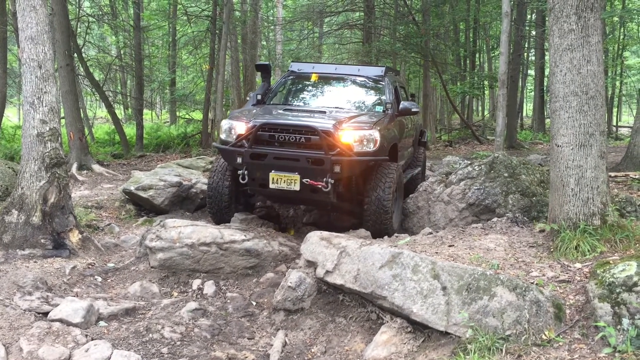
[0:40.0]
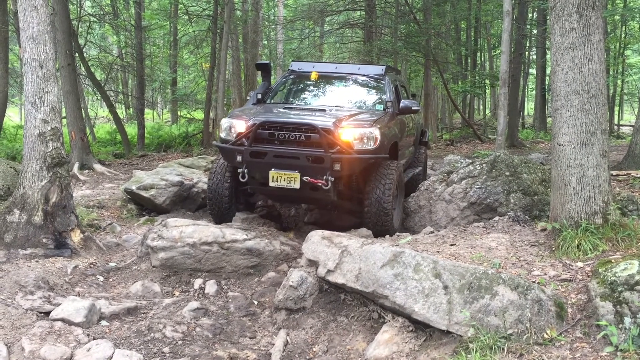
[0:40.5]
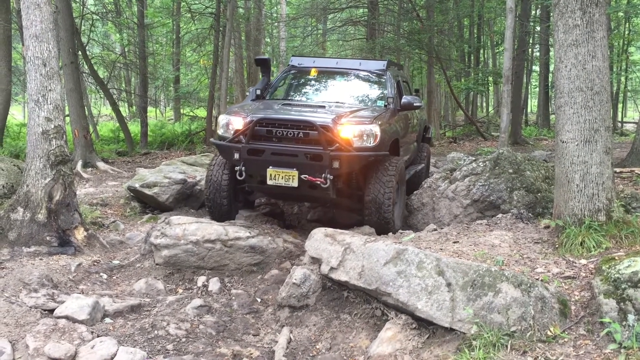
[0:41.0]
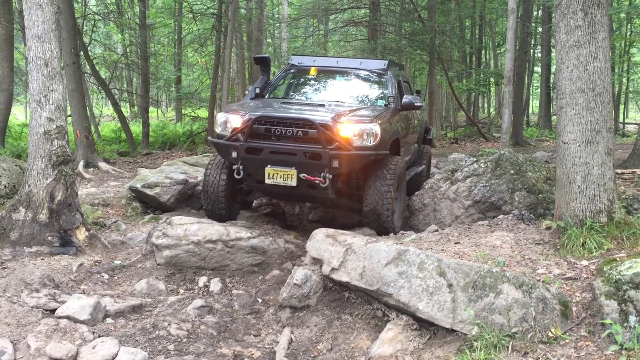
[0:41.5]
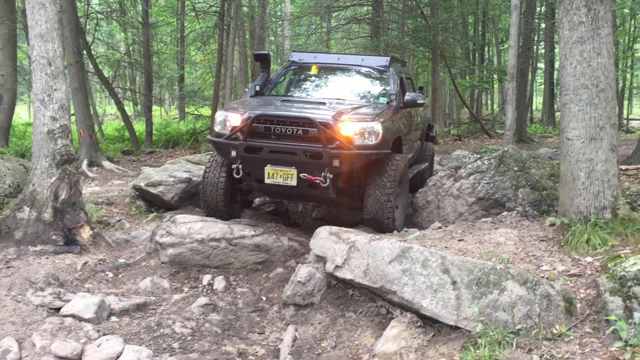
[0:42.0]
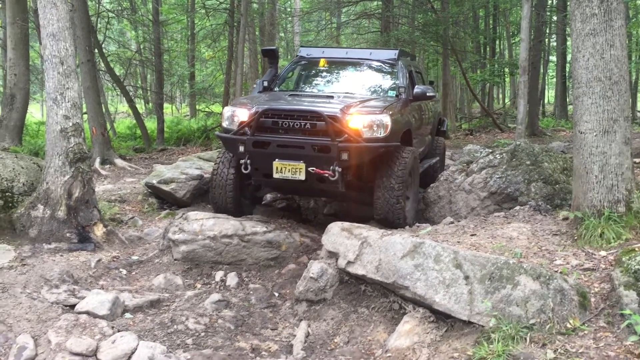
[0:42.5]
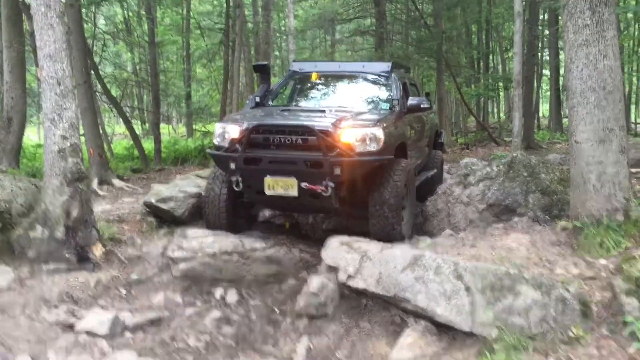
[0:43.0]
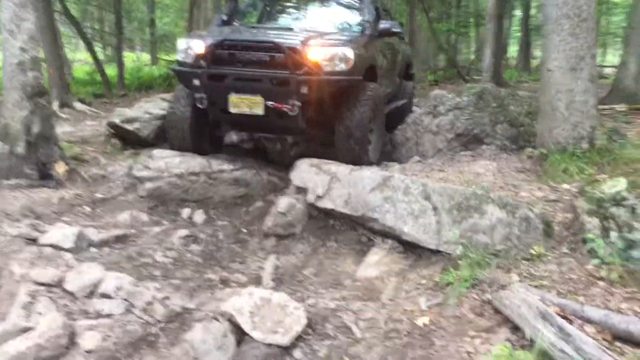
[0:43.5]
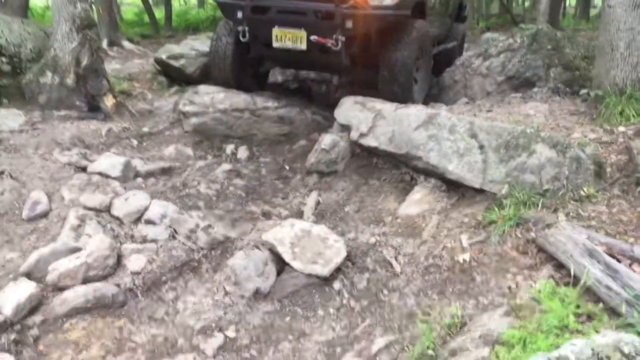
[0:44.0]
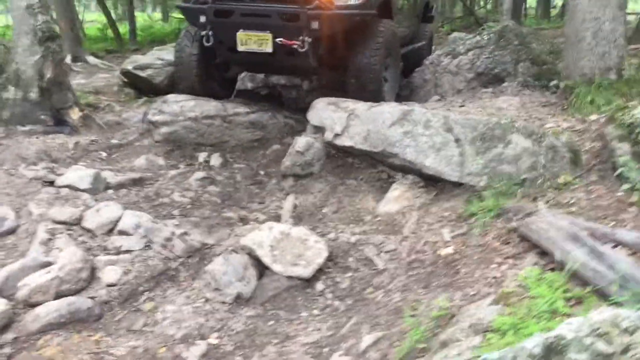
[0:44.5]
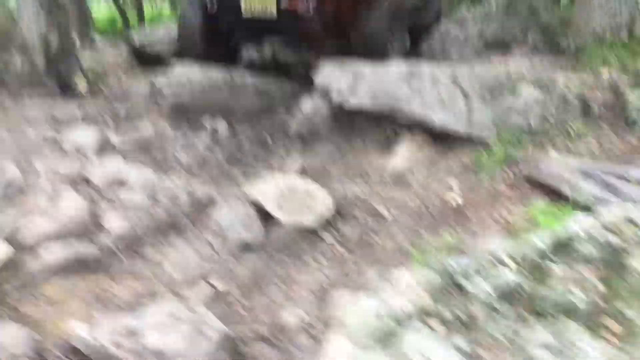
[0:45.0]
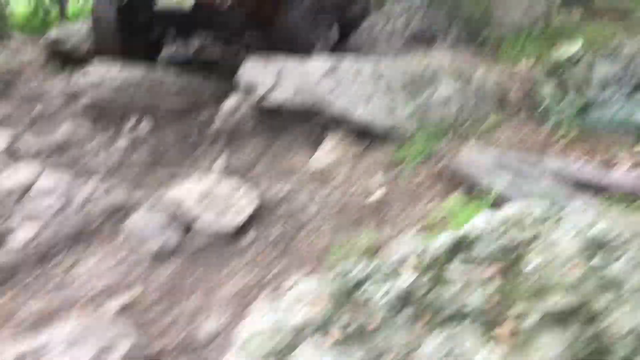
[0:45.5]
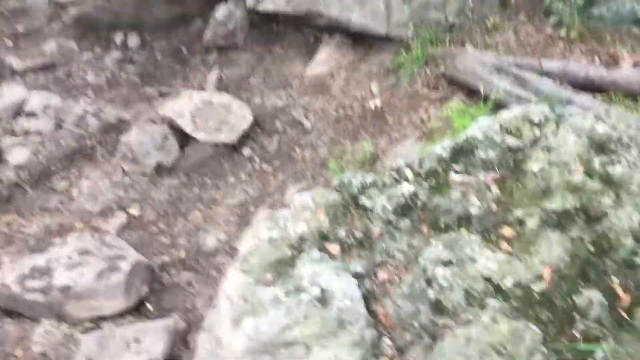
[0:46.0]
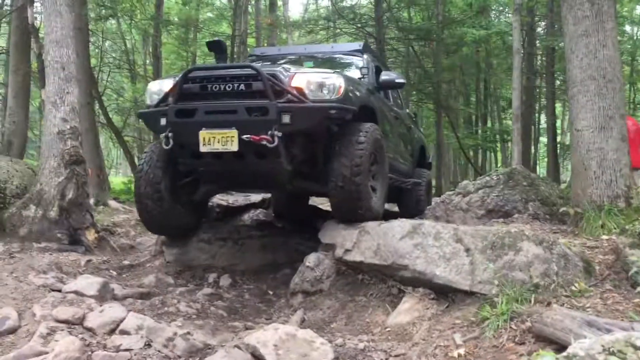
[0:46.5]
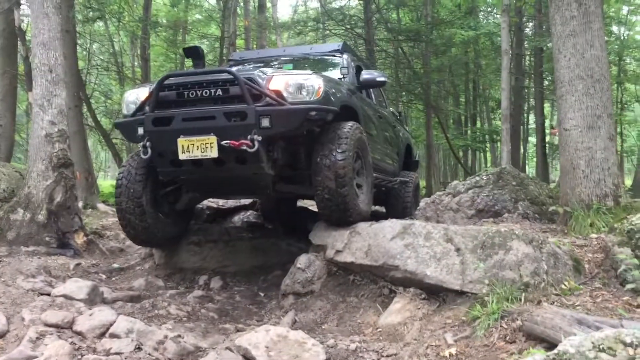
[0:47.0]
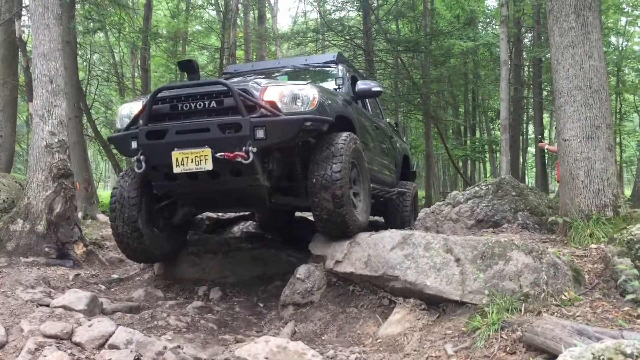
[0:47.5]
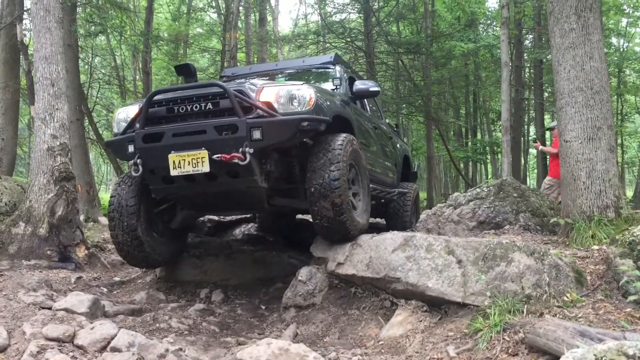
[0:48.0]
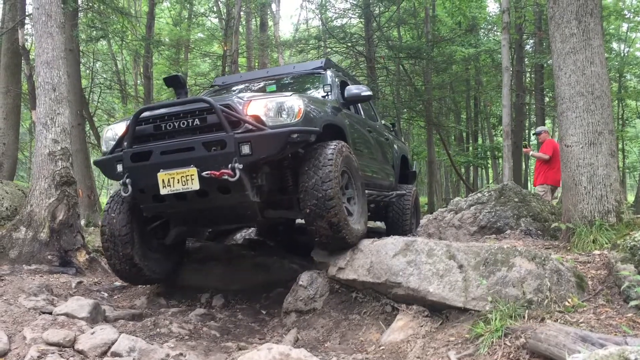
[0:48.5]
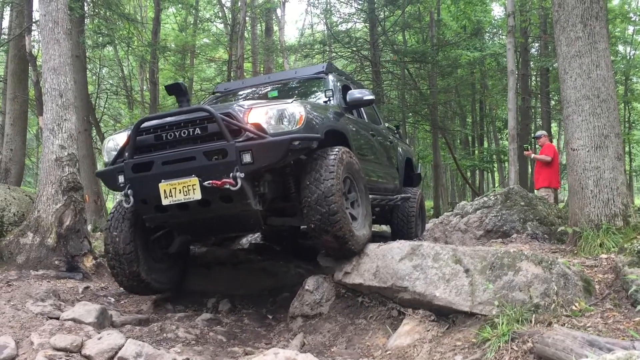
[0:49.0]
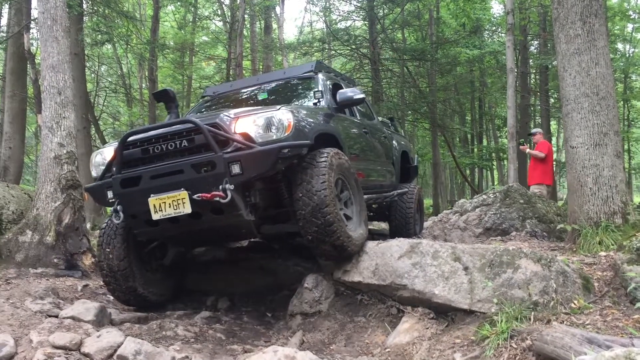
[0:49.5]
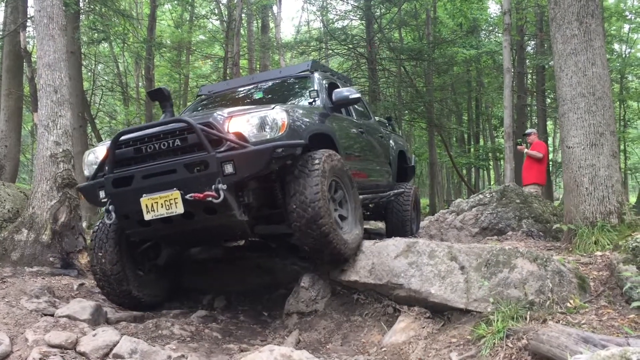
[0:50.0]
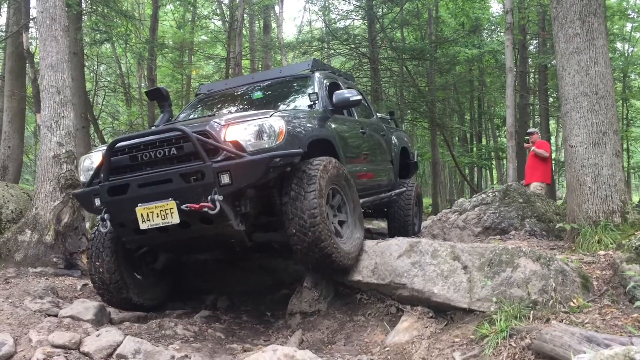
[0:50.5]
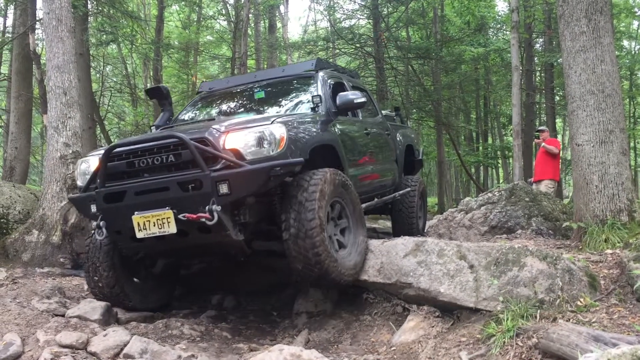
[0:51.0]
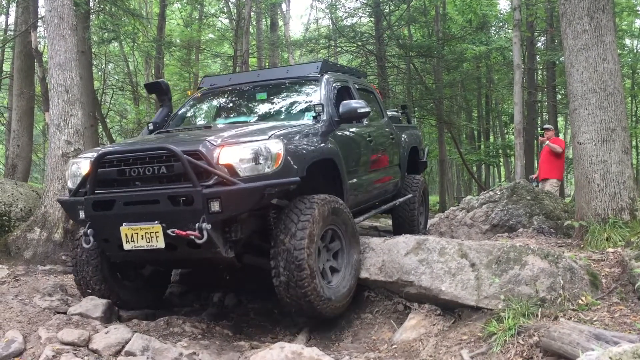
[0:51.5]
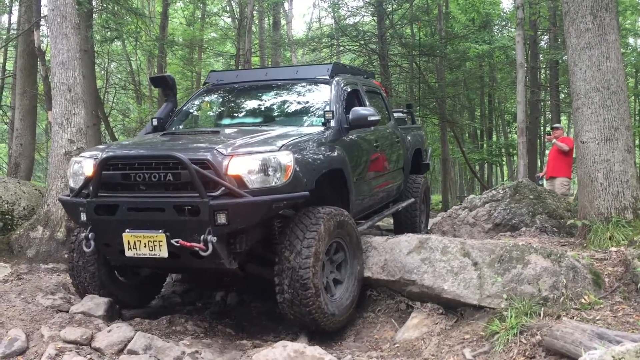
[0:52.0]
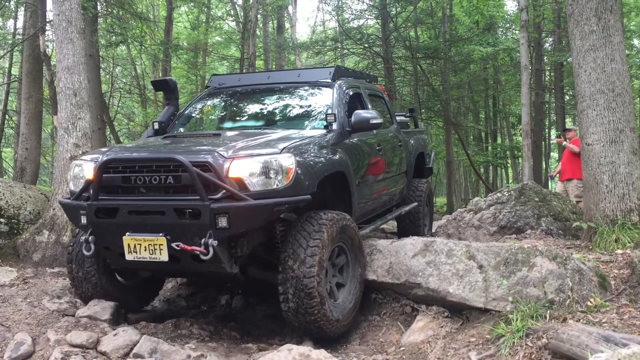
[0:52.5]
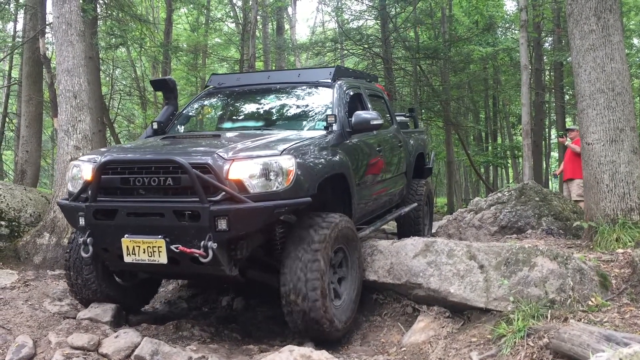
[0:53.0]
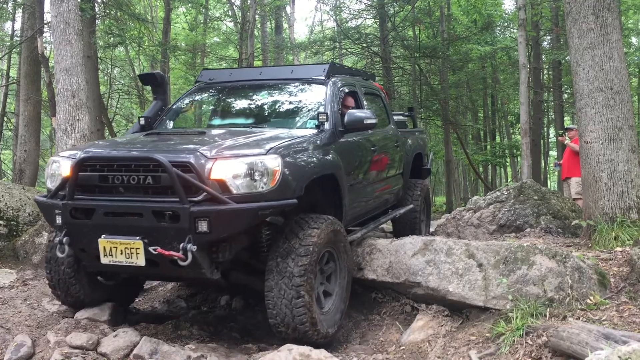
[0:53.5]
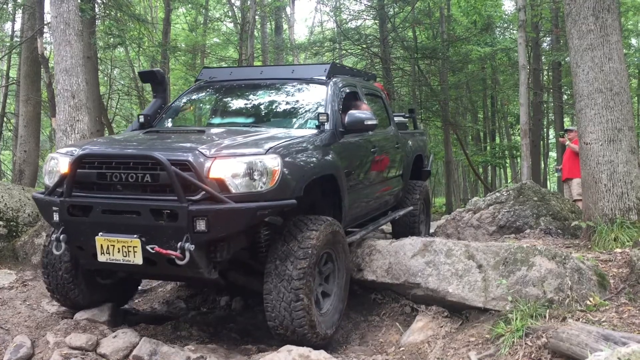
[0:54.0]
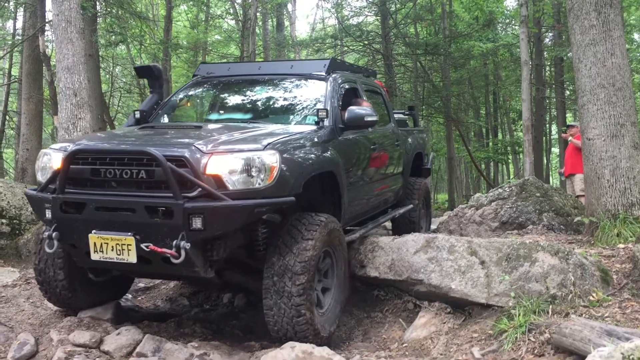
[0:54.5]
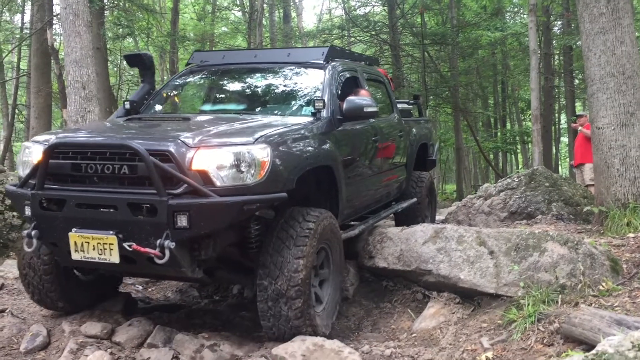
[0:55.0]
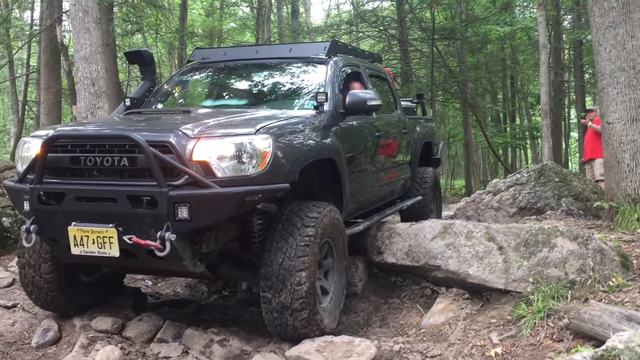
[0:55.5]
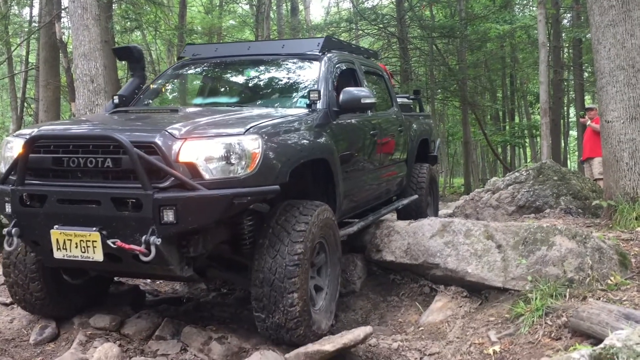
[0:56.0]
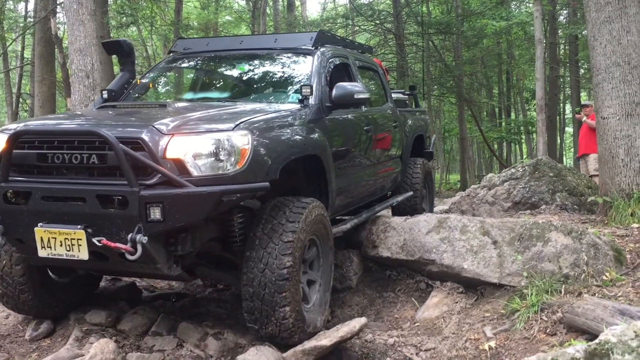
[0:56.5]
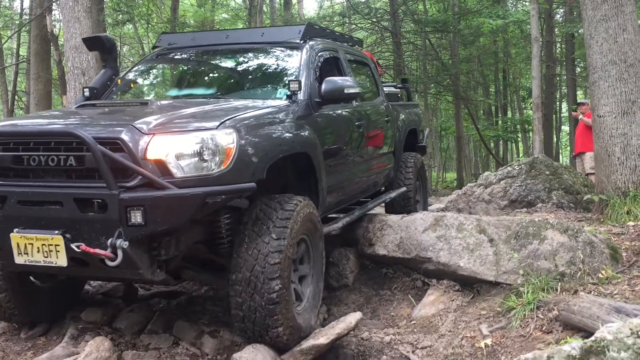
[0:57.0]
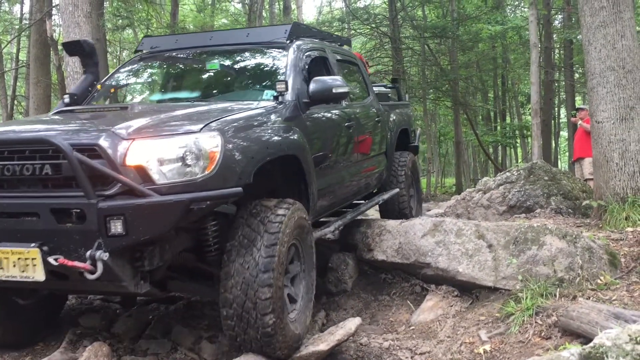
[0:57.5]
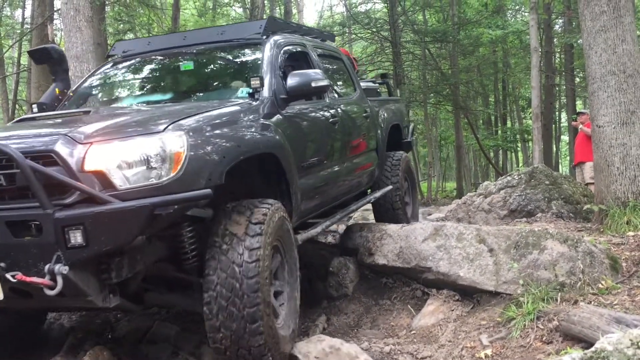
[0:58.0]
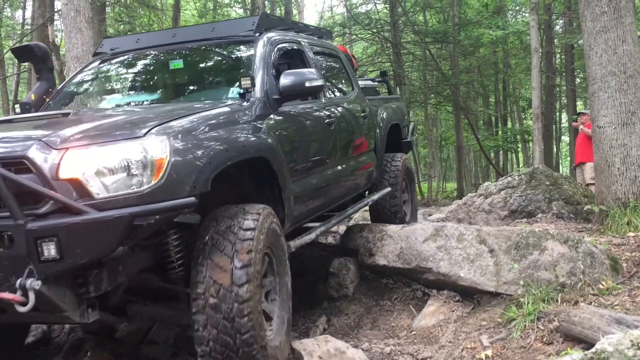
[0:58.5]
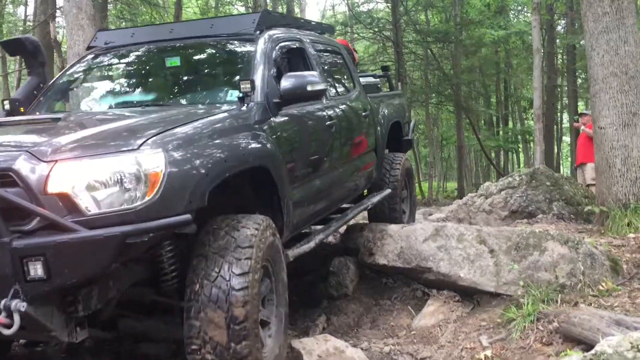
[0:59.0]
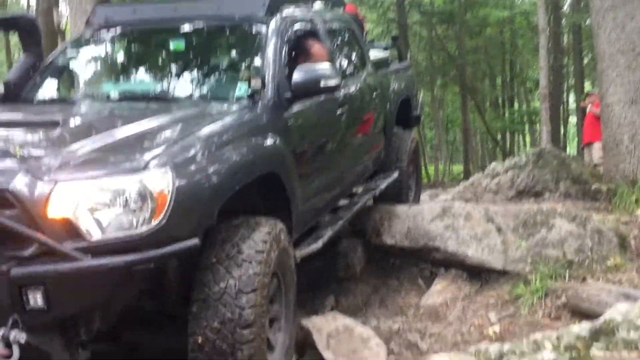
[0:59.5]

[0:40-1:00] The truck is still on the rock. It is a Toyota, as shown on the front grill, and it has a bumper sticking out that appears to have been added on for extra support. A big smokestack comes up the left side by the door, goes up, and angles out to the left. Thick trees are behind it and big, jagged rocks are in front of it. Its lights are on. On the front bumper there is something white all across the bottom with a large portion in yellow; where it is from can't be made out, maybe Arizona. The truck barely rocks forward and starts going up on the rocks. The camera pans down until only the headlights are visible, keeps going down until even the headlights are out of view, and then there is a jump cut. A man in a red shirt comes in from the right side, walks left, and vanishes behind a tree. The truck is now right on the edge of two big rocks, its tires barely hanging on. As it slowly pulls forward, the man walks out from behind the tree with a camera, filming from behind. The front passenger-side tire comes down onto the ground while the right side is still kind of up on the rock; then both are down. The truck drags a little on the rock, dragging on its step, and slowly rolls forward, going slightly off the left side of the screen. The back tires reach the edge as the man in the truck looks out and back to see if he will make it.